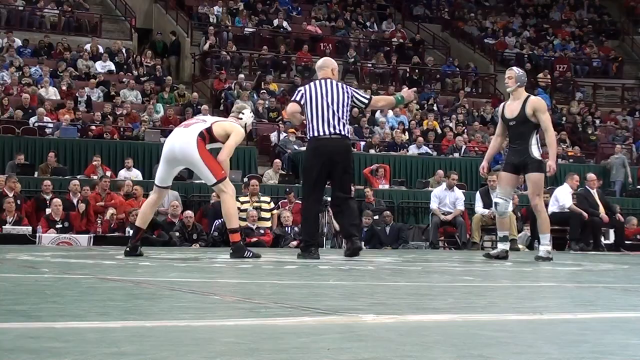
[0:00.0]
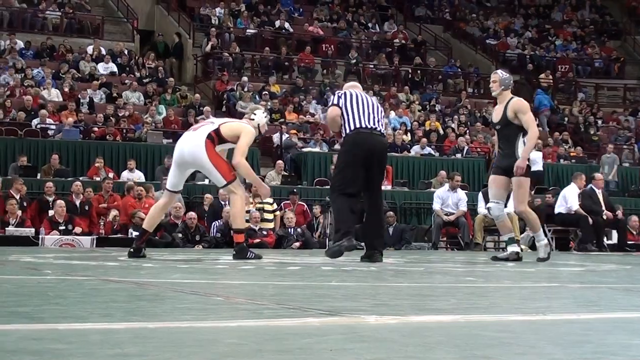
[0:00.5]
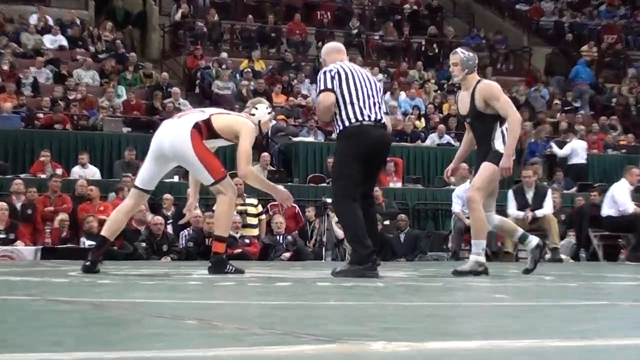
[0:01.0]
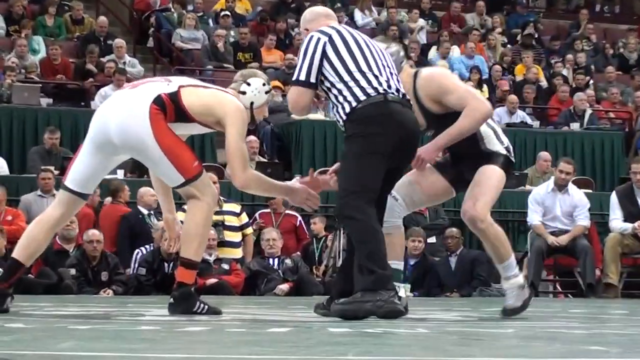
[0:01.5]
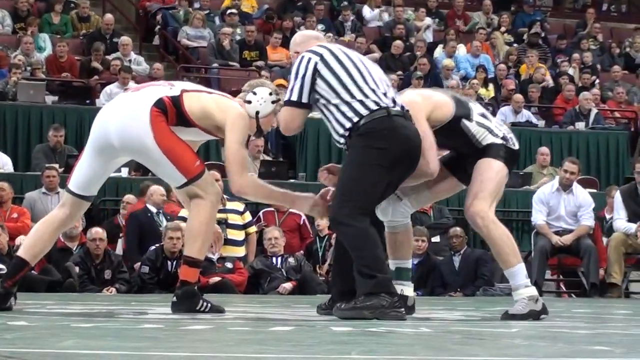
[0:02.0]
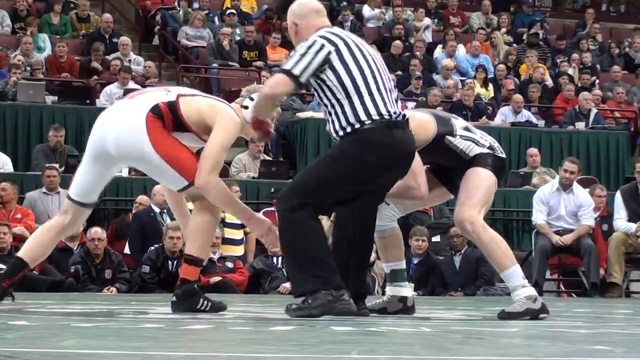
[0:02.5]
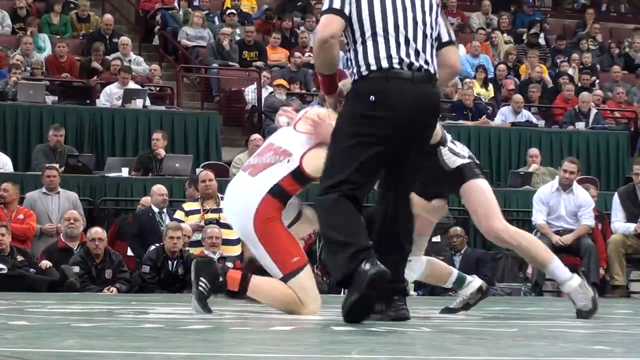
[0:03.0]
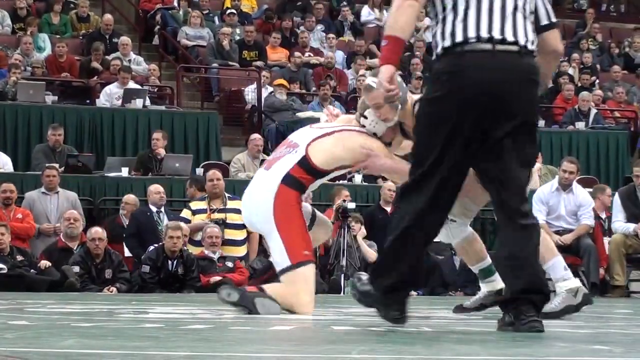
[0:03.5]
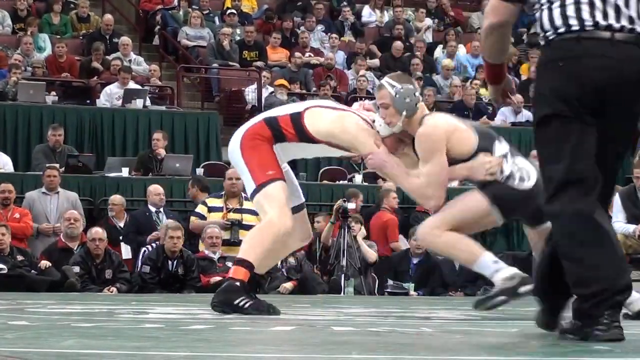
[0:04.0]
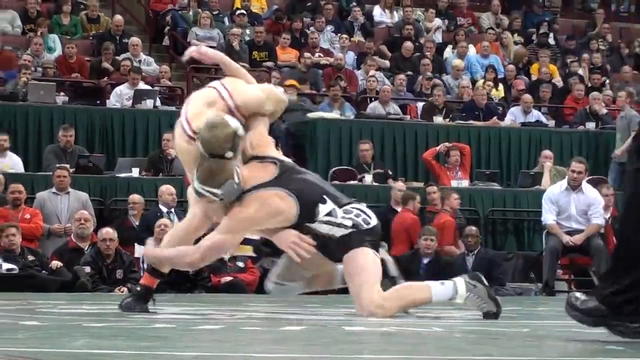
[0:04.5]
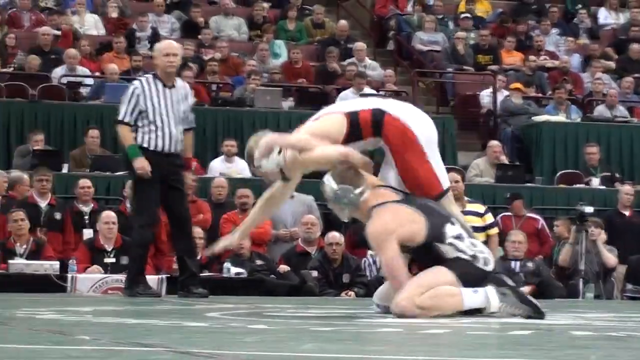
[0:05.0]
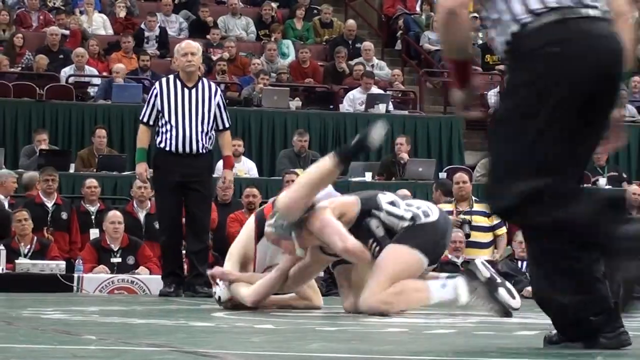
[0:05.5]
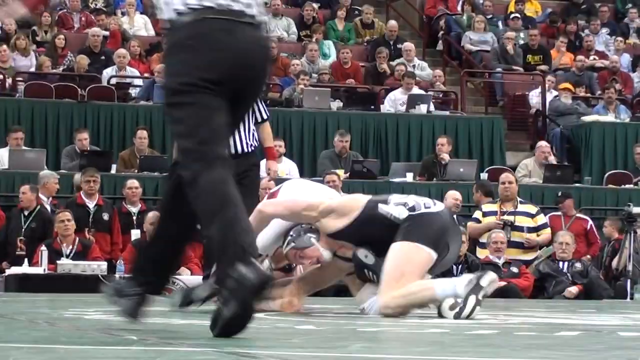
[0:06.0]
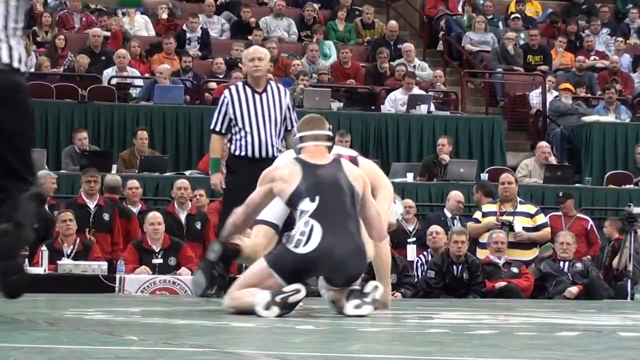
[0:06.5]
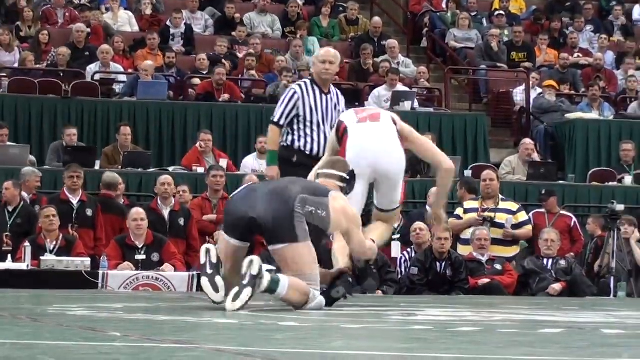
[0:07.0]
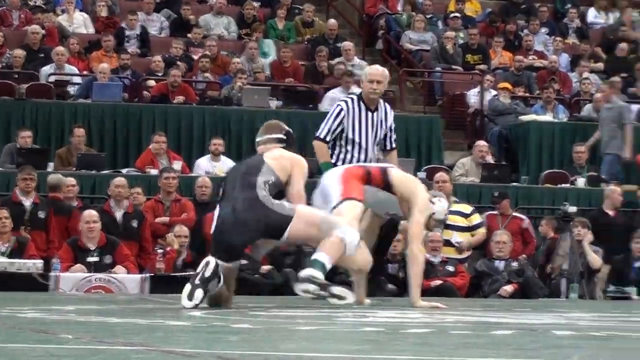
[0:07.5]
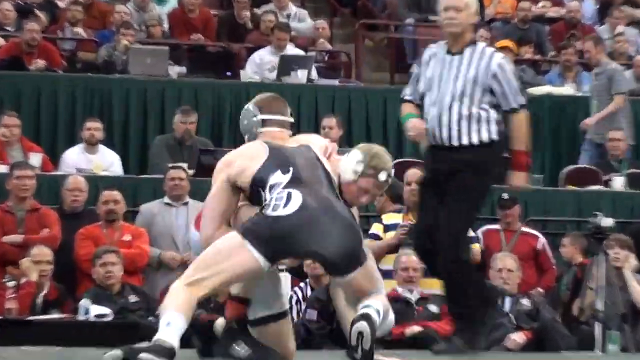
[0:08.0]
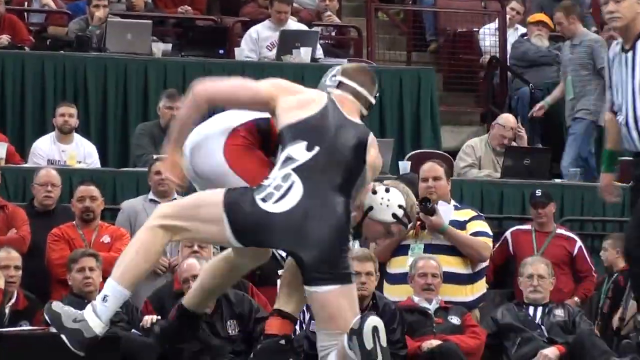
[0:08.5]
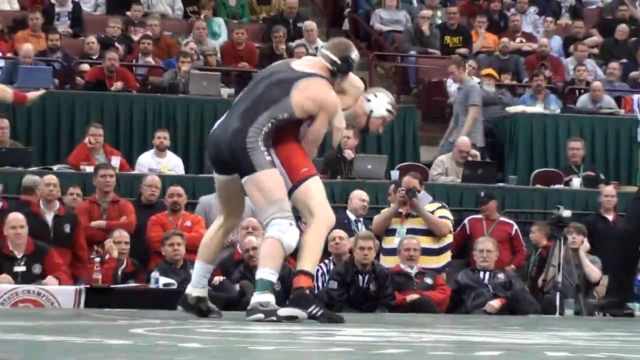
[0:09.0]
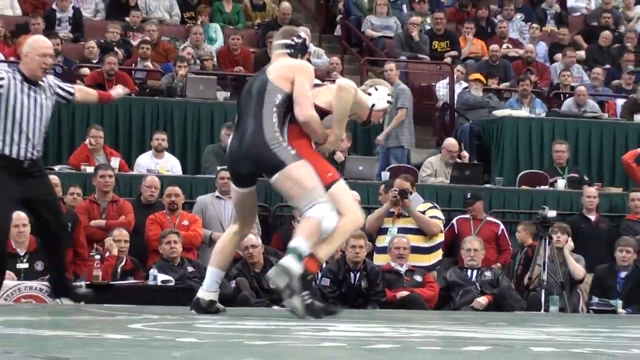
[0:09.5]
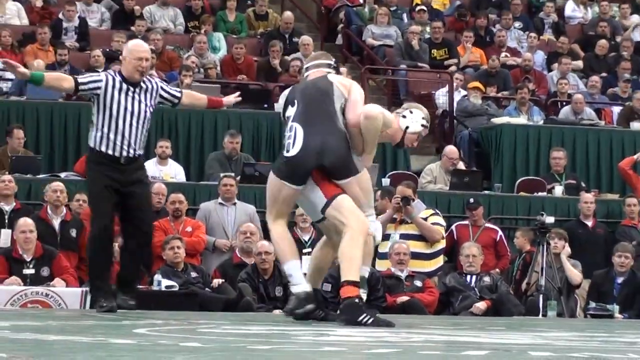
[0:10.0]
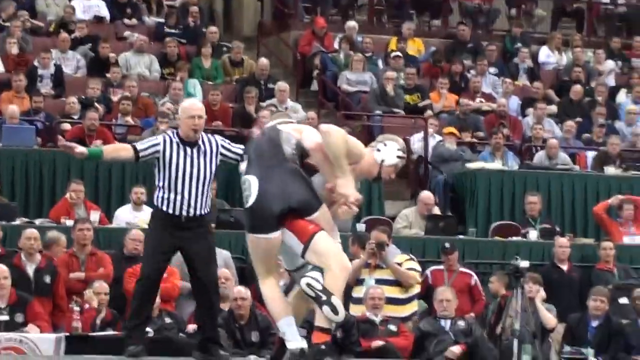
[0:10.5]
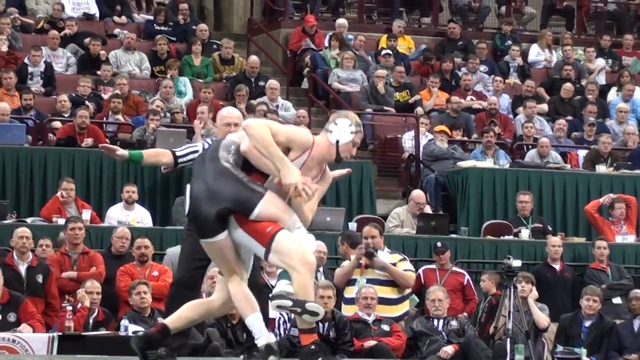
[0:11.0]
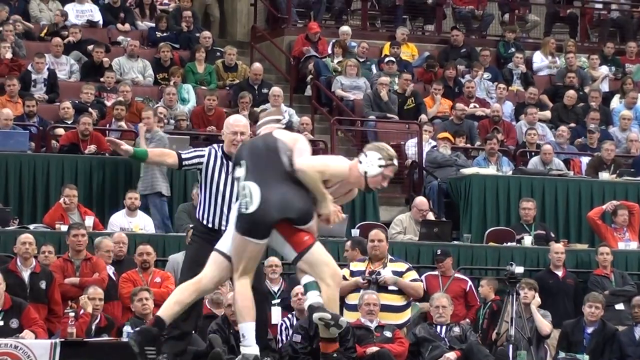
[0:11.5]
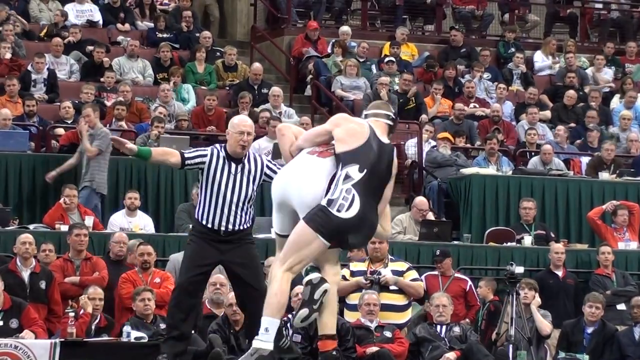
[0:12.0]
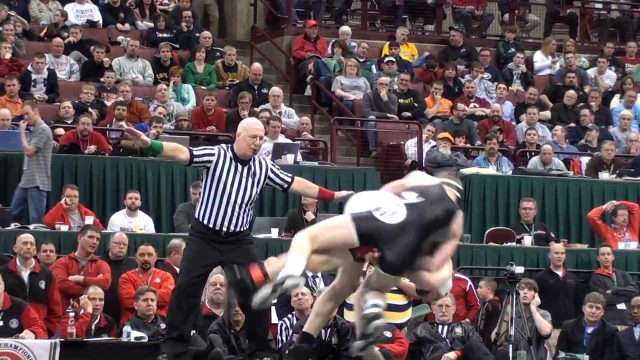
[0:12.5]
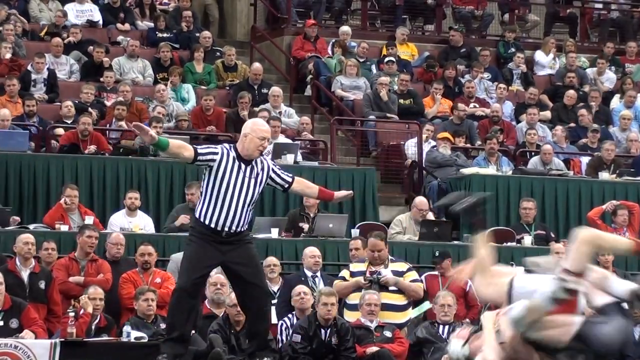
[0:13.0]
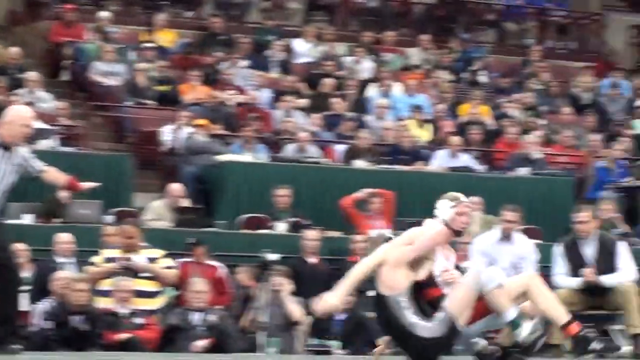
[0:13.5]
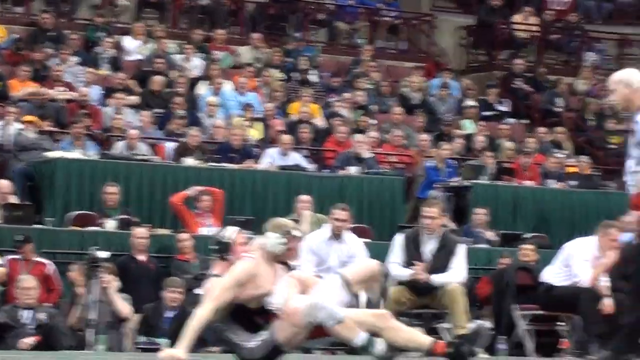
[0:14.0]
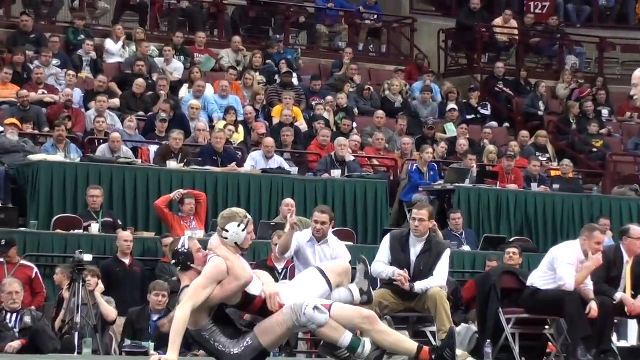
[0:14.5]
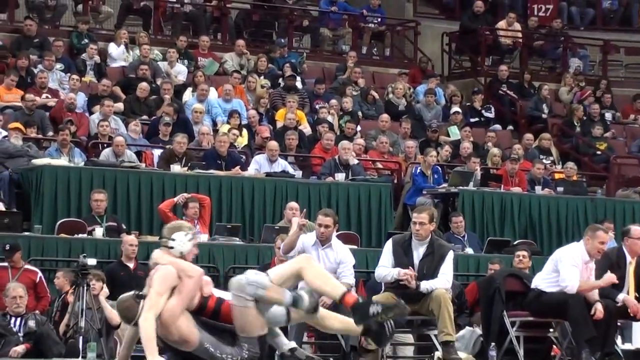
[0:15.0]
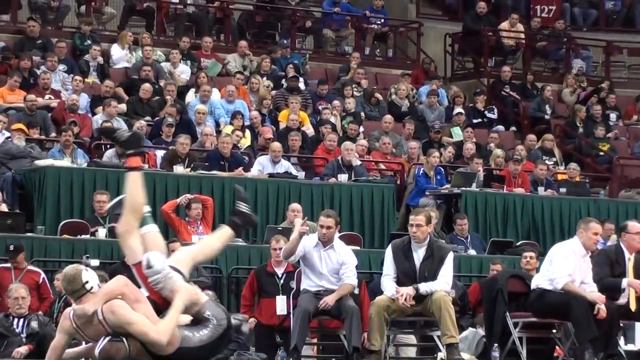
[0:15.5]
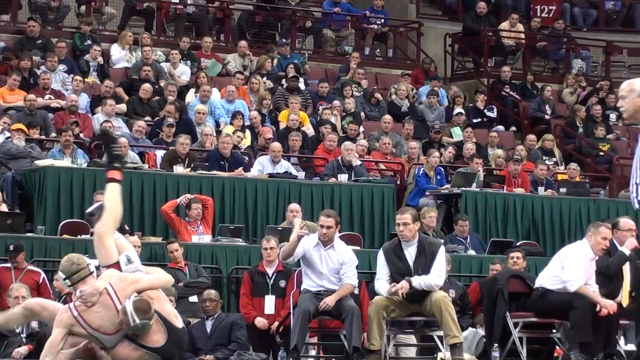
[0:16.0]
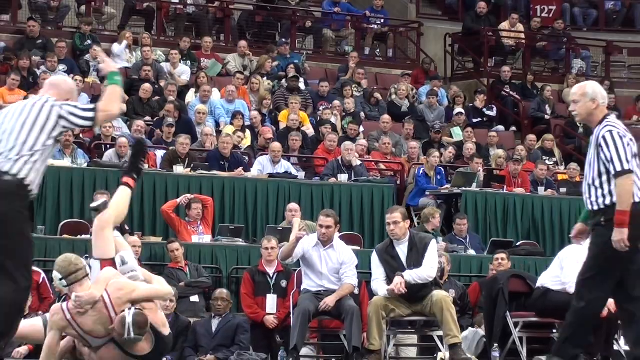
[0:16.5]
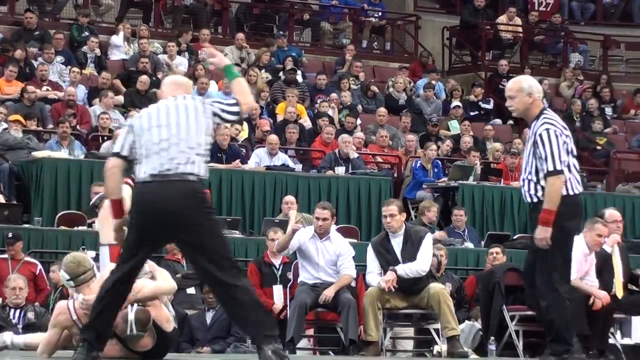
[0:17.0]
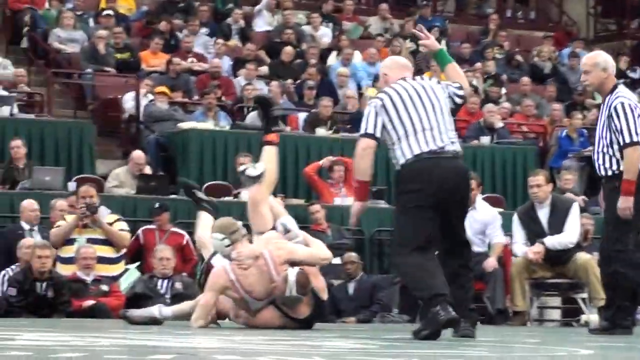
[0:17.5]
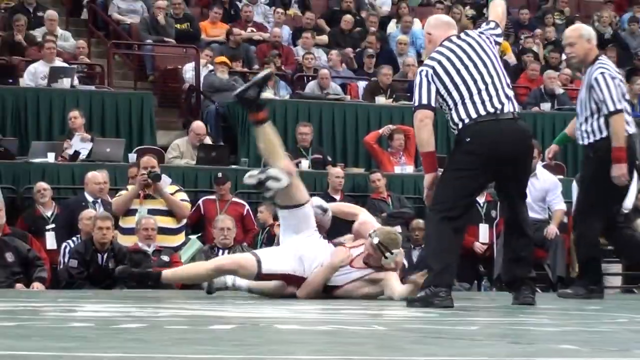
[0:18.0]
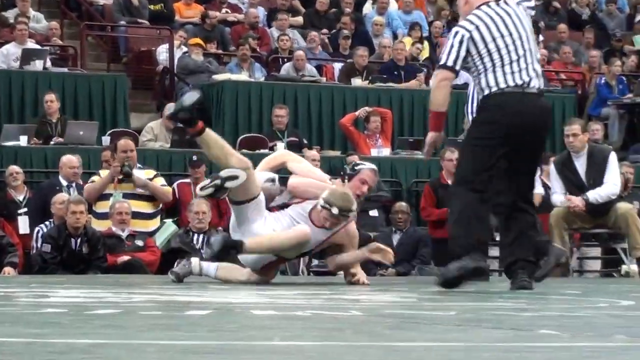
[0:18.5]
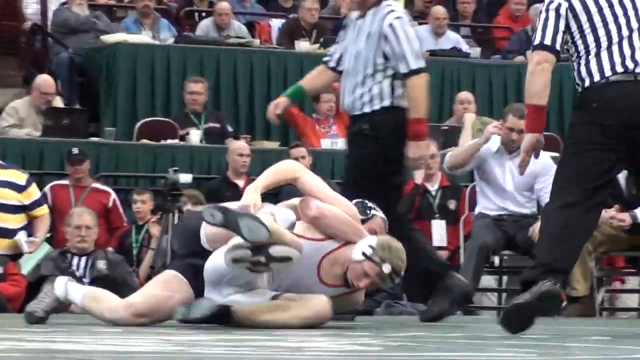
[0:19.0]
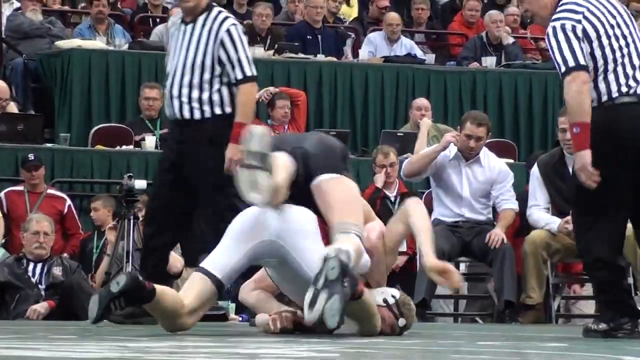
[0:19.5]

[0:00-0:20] What looks like a wrestling match, probably collegiate, takes place on a standard wrestling mat, where two athletes square off with the referee positioned between them. The wrestler on the left wears a singlet that is white in the middle with red panels on the sides, with a large black number on his back, black Adidas wrestling shoes and standard headgear. The wrestler on the right wears a solid black singlet, gray wrestling shoes, a knee sleeve on his right leg and protective headgear. The referee is dressed in black slacks and the traditional white shirt with black stripes, with a green and red wristband on each arm. After a quick handshake, both wrestlers drop into their stance and the action starts immediately: they grab at each other, test grips and start to circle. The wrestler in black lunges in and almost gets the takedown but loses the grip. The wrestler in white recovers, and they tumble sideways together, each trying to control the other's body. The crowd in the stands watches closely, especially those in red team jackets, likely the home team.